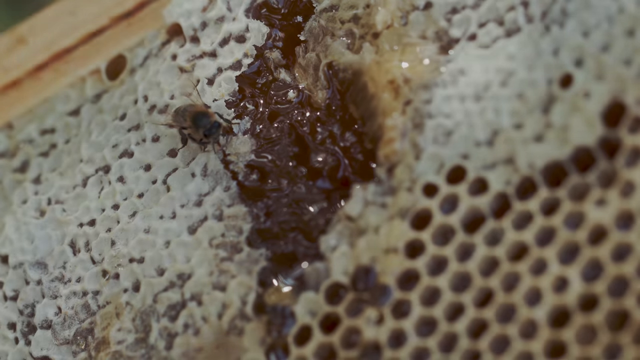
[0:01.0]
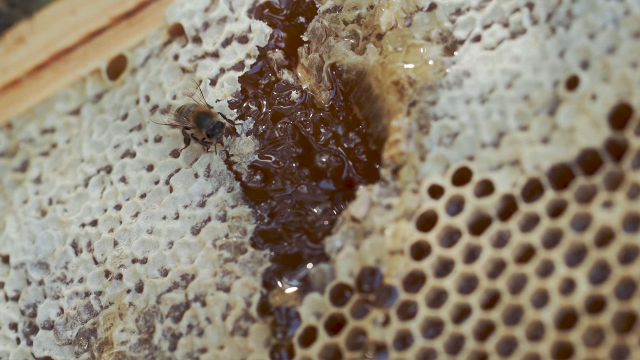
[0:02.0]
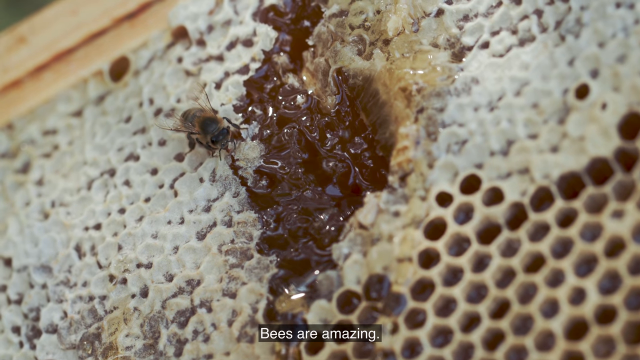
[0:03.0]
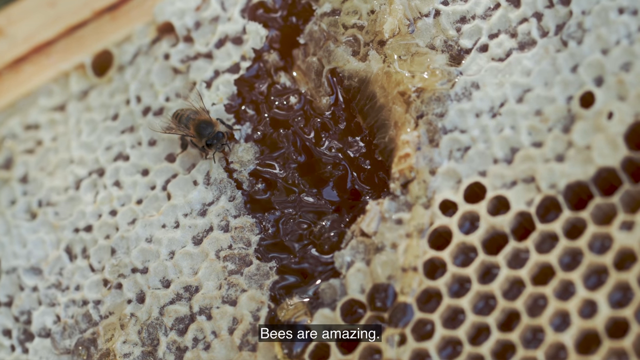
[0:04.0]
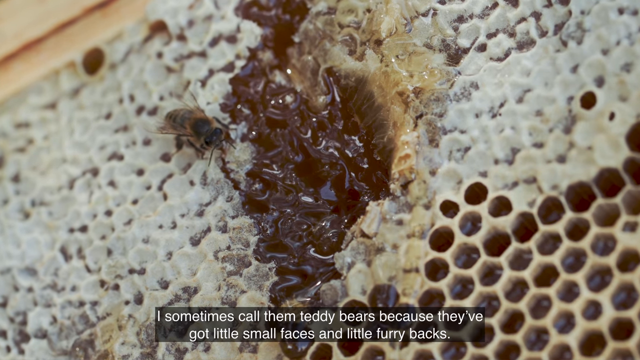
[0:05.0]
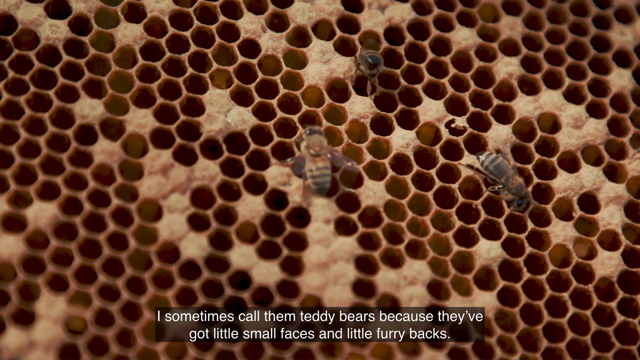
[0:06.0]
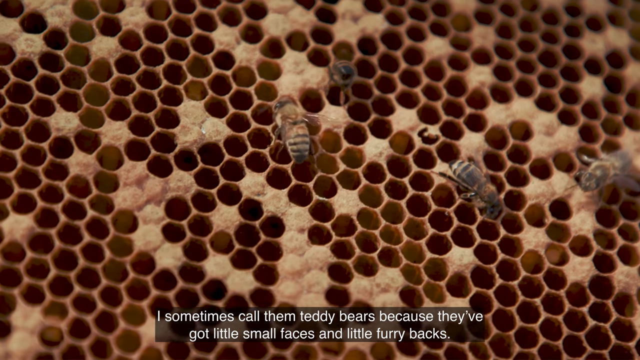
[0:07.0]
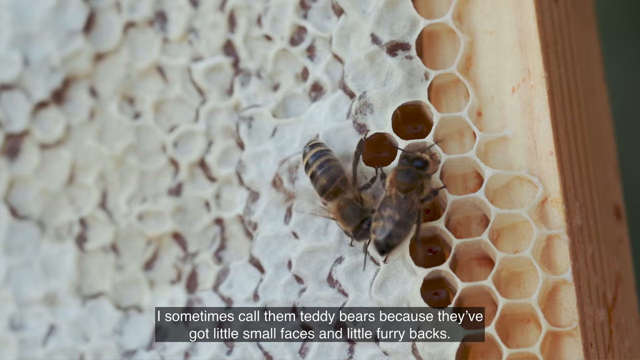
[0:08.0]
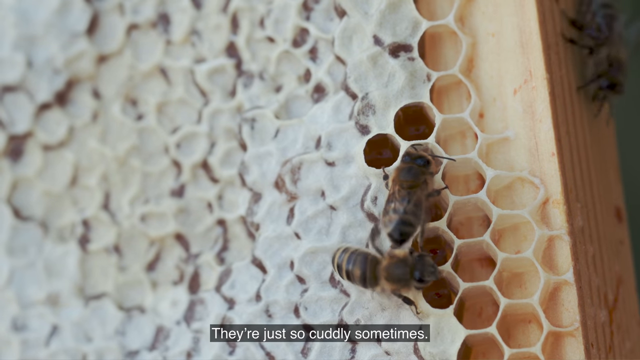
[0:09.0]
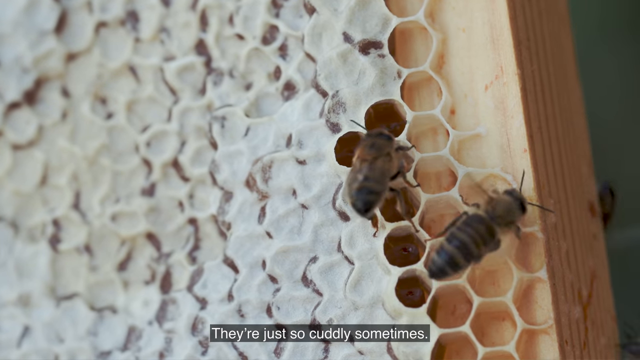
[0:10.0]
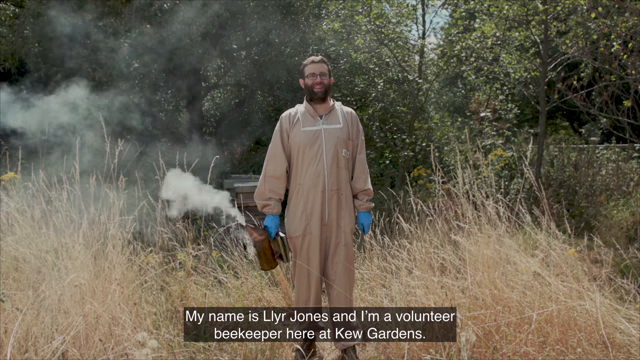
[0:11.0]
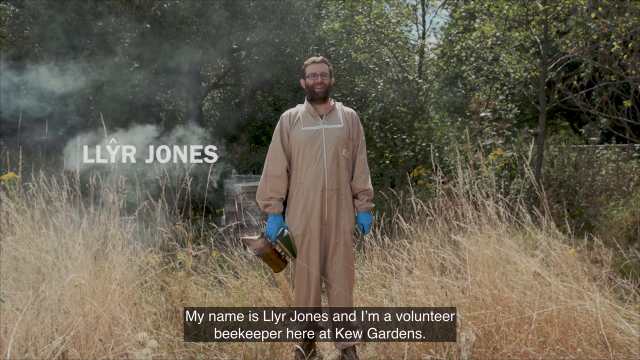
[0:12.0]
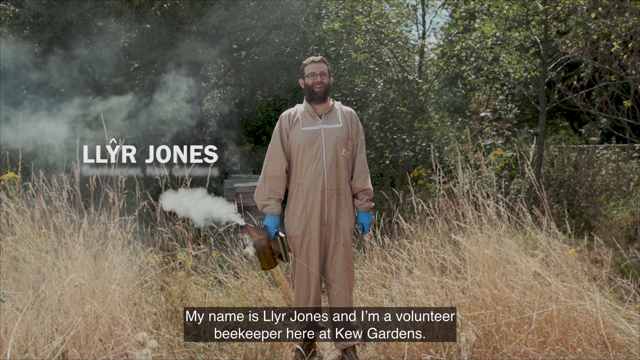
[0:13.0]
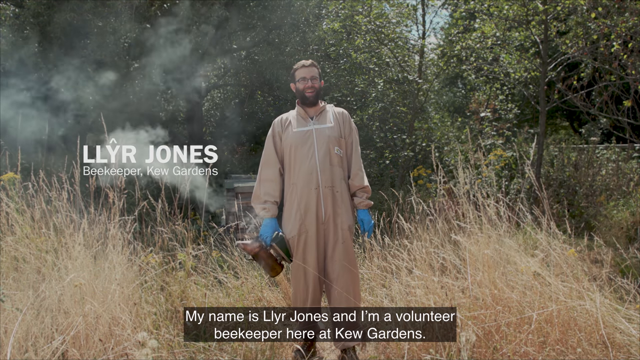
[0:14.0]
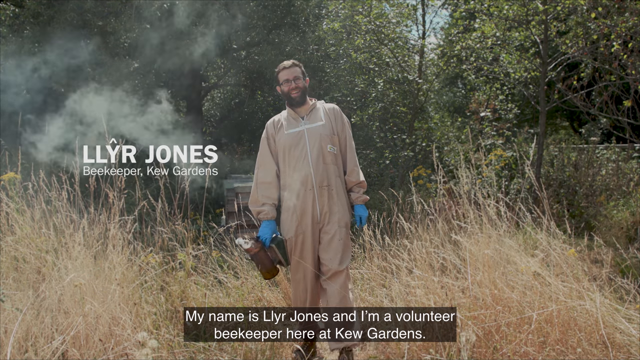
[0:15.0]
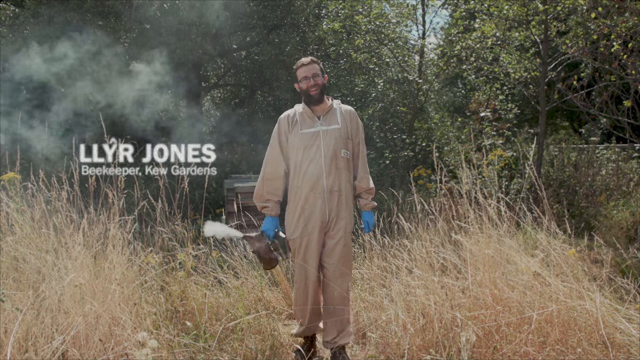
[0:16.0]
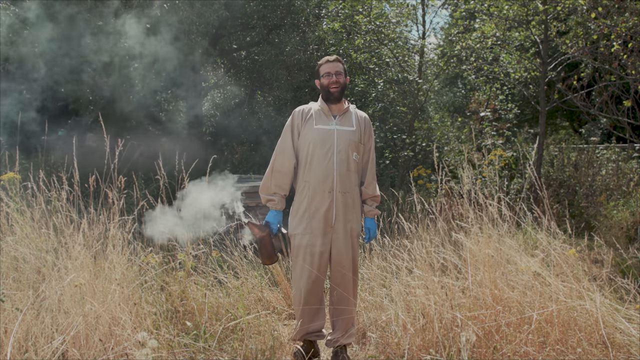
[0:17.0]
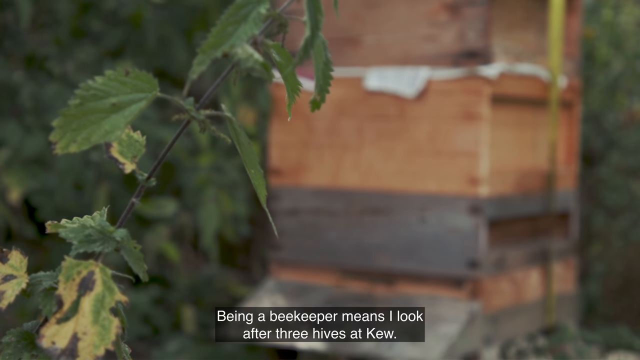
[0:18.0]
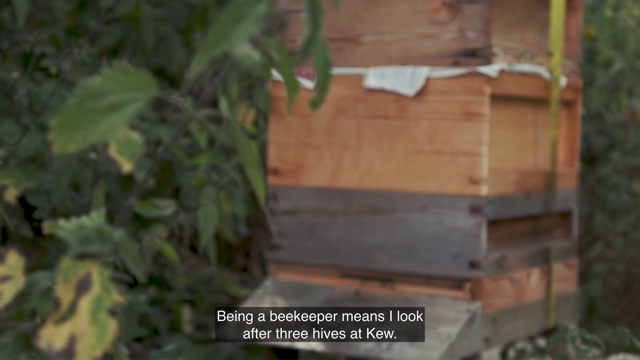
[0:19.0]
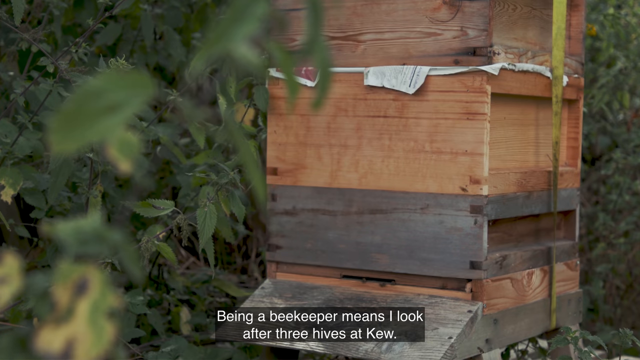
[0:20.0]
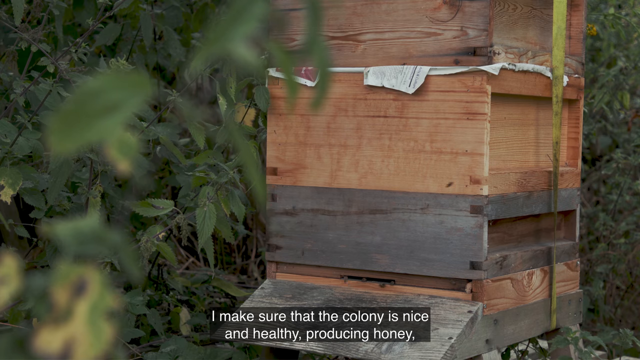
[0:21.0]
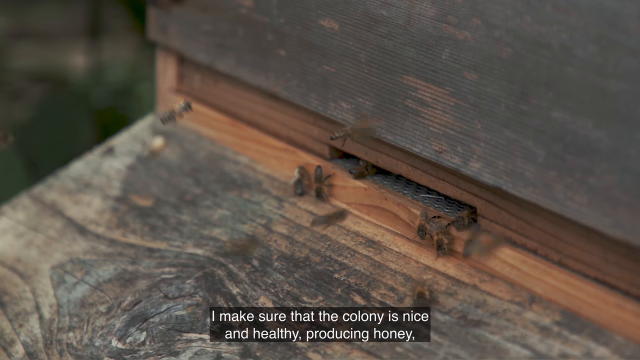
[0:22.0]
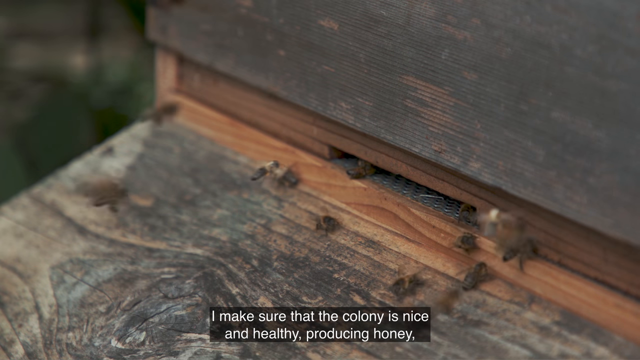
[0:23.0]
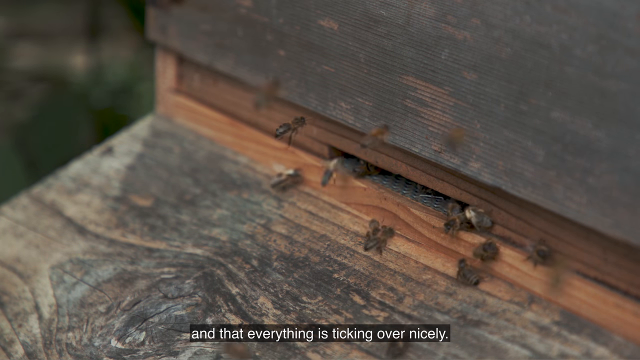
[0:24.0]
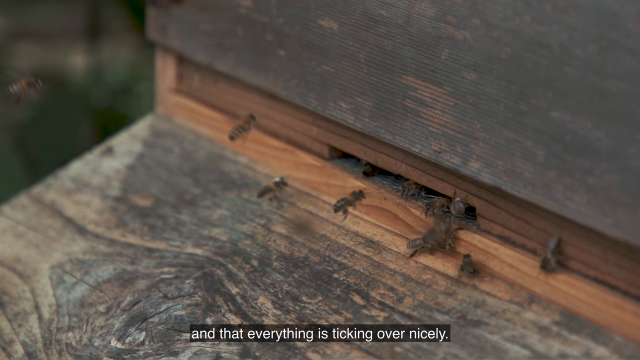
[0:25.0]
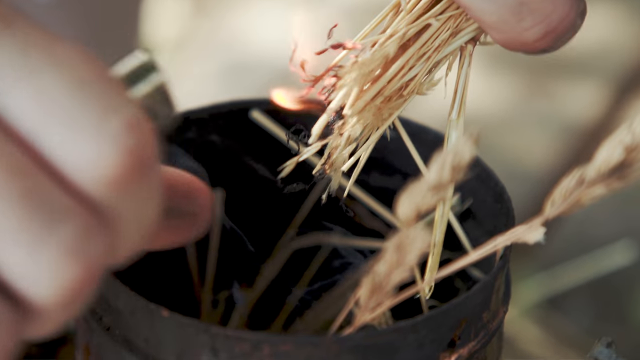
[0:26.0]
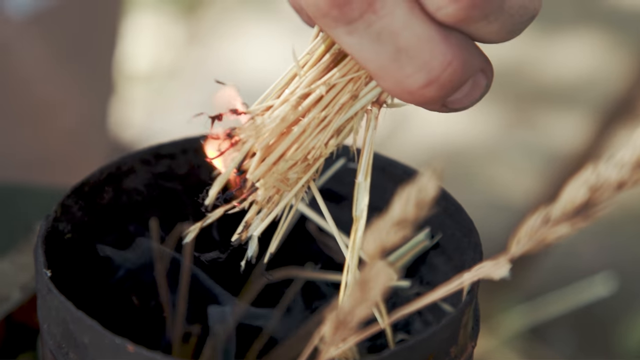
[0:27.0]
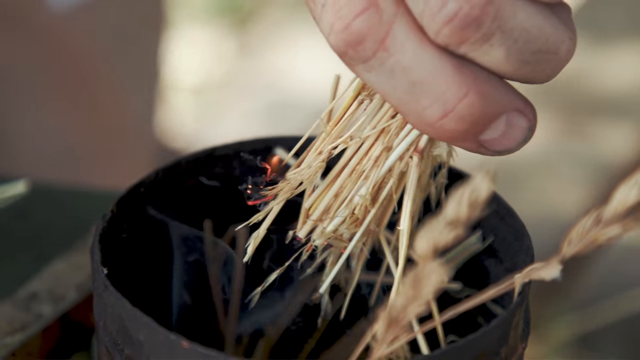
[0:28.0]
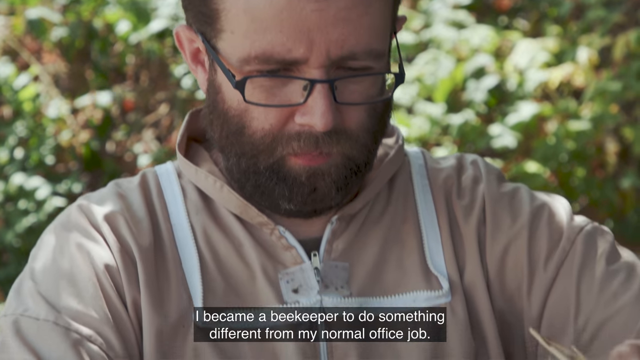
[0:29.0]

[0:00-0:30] Bees are visible on beehives, and something brown is oozing out, suggesting the video is about beekeeping. A man introduces himself as Llyr Jones, a beekeeper at Kew Gardens, and says he volunteers there. Bees appear to be busy around the hives. A wooden beehive appears with bees seemingly moving around it, and there seem to be three beehives stacked together.